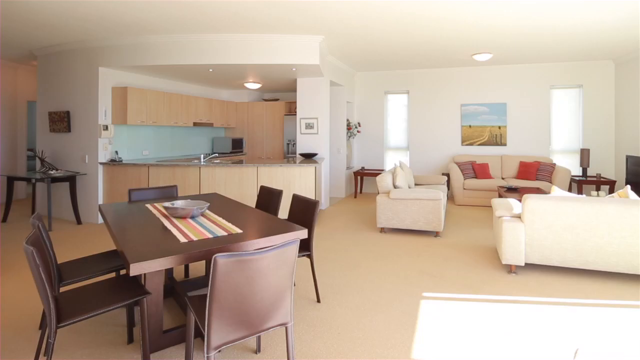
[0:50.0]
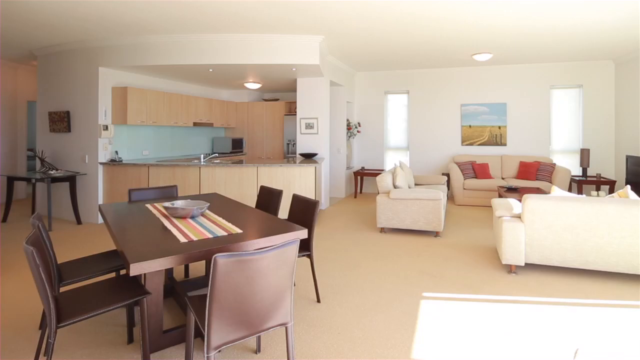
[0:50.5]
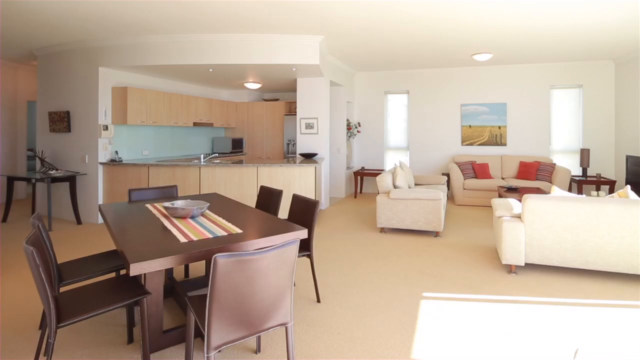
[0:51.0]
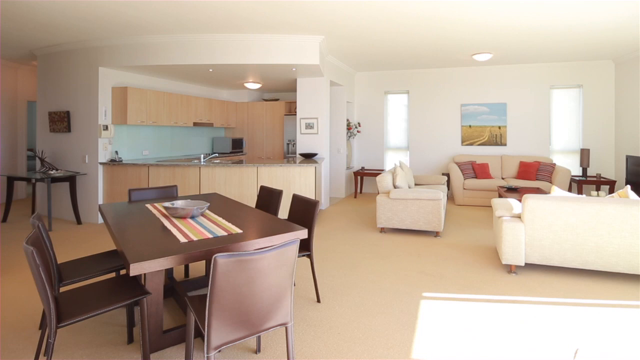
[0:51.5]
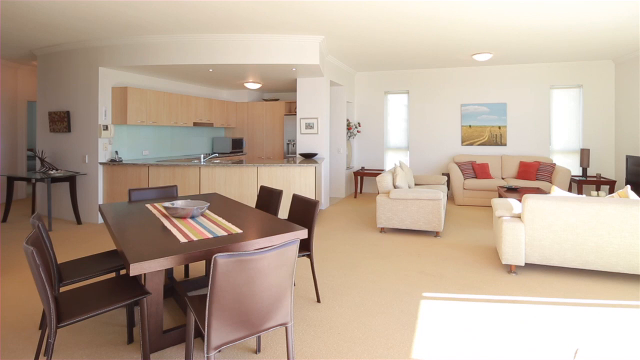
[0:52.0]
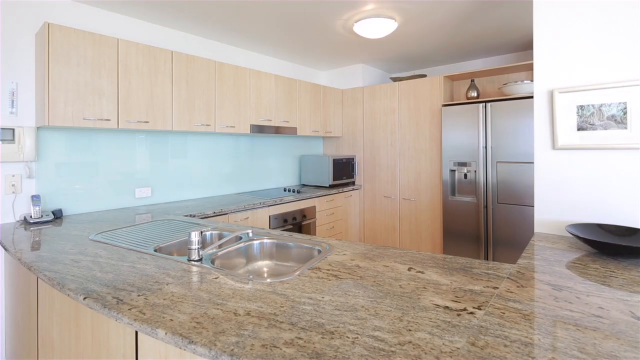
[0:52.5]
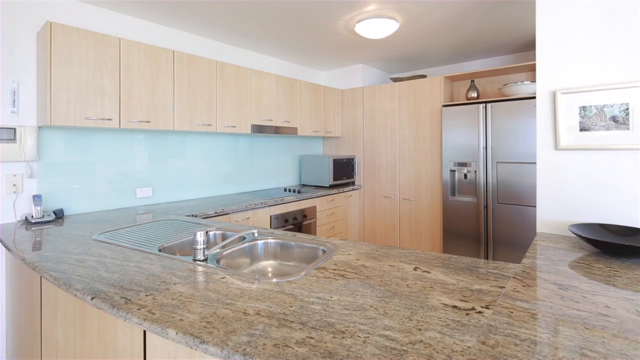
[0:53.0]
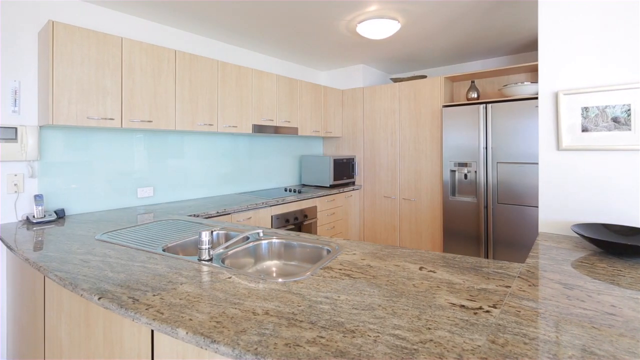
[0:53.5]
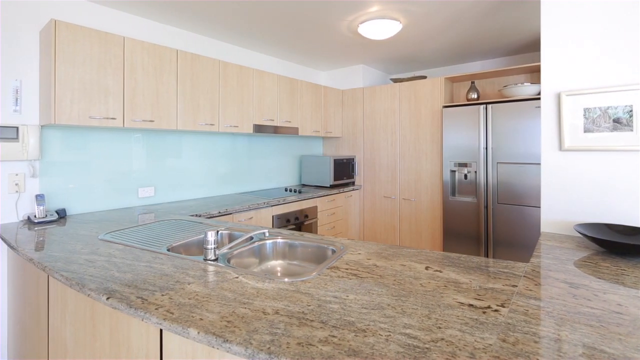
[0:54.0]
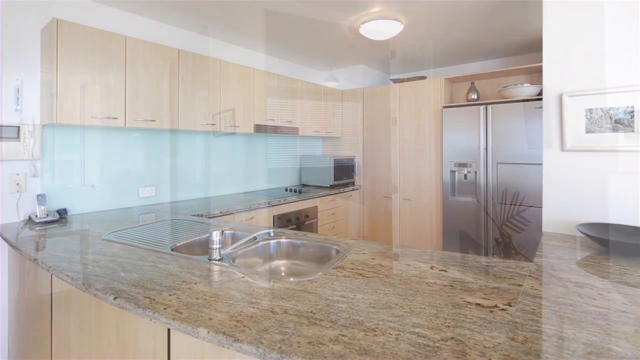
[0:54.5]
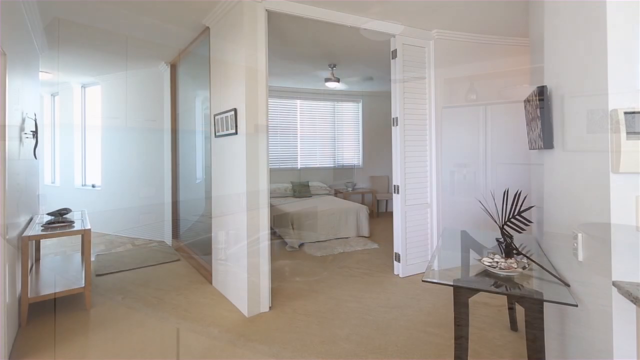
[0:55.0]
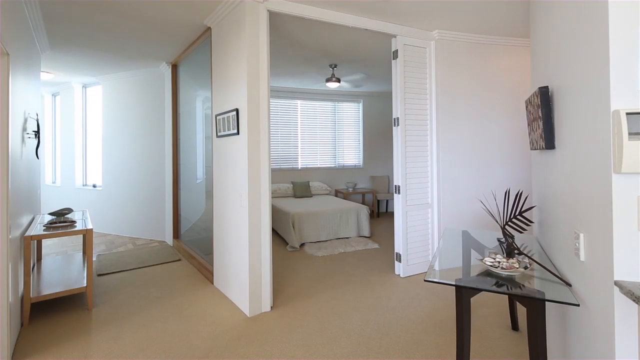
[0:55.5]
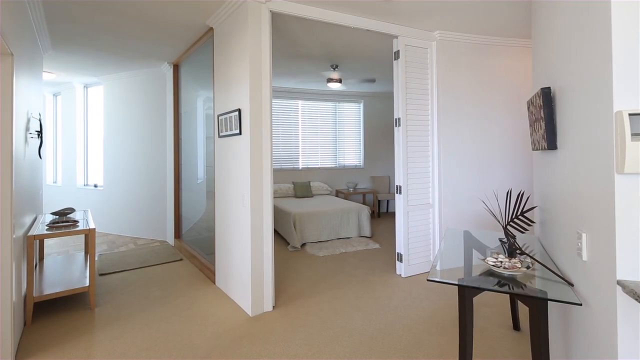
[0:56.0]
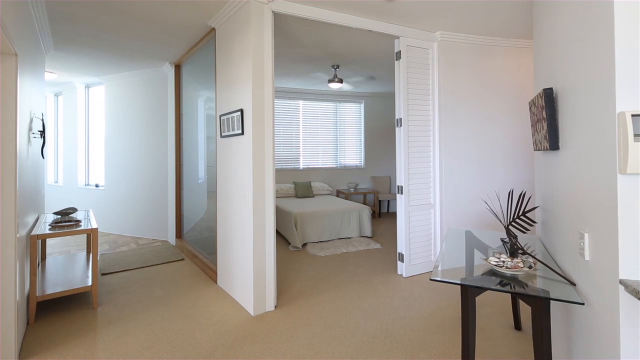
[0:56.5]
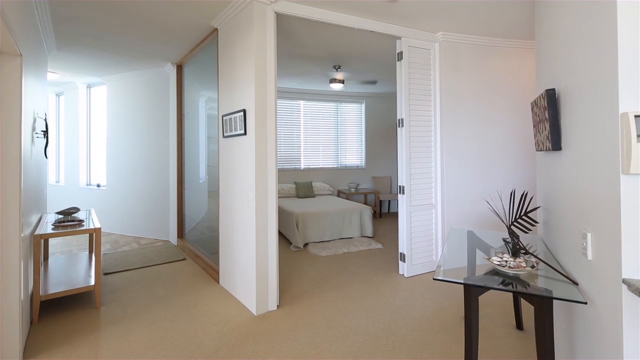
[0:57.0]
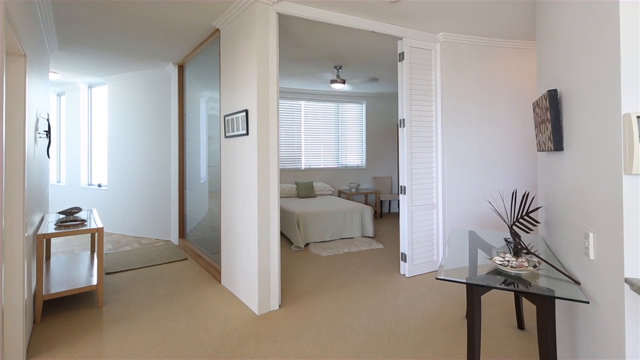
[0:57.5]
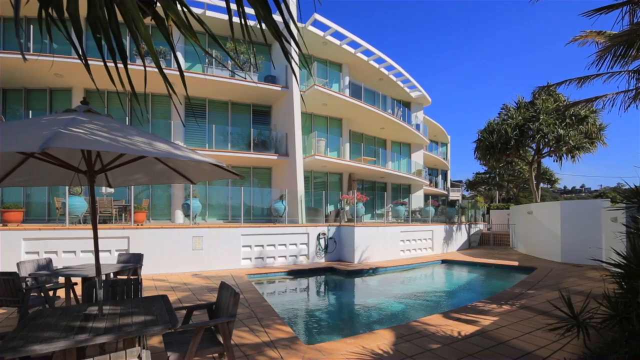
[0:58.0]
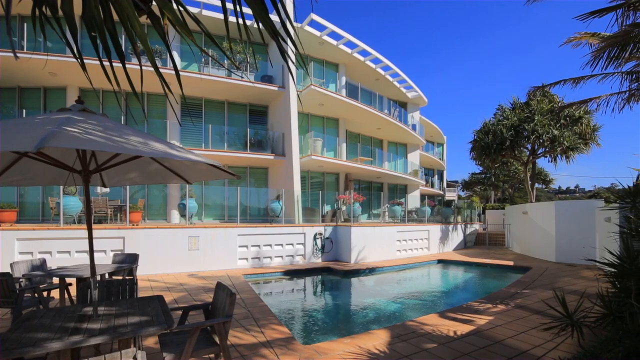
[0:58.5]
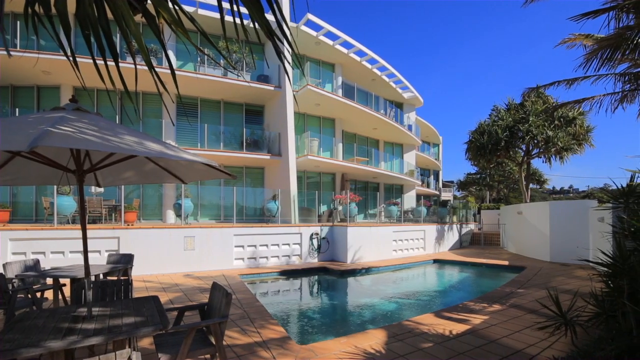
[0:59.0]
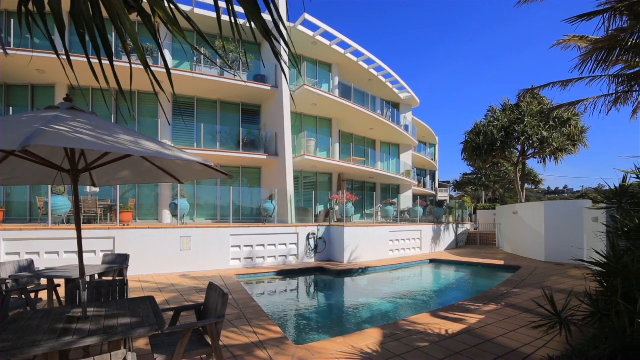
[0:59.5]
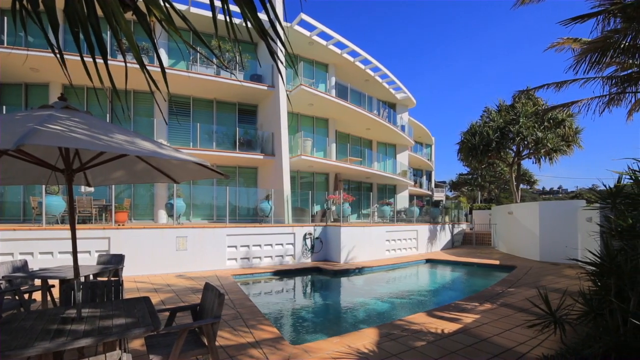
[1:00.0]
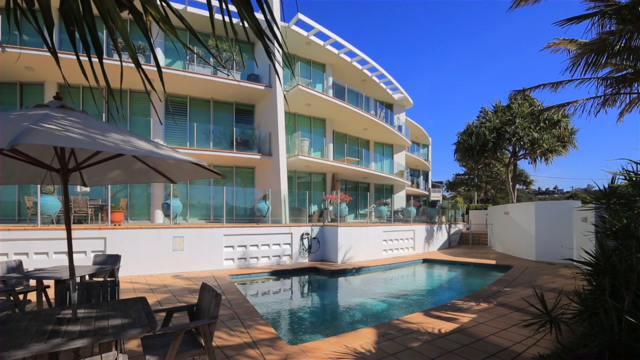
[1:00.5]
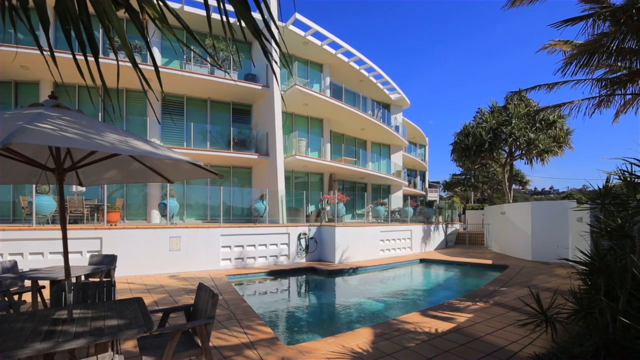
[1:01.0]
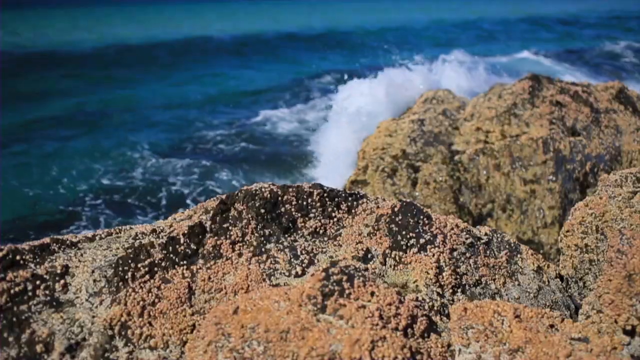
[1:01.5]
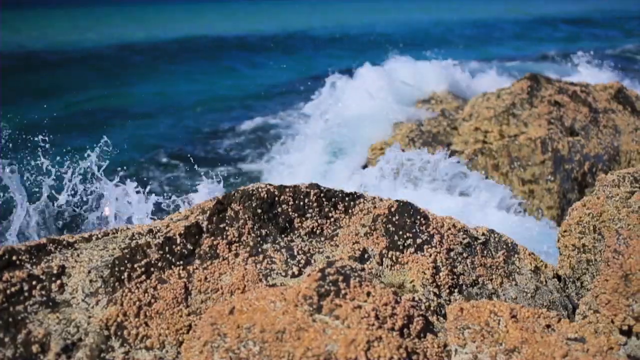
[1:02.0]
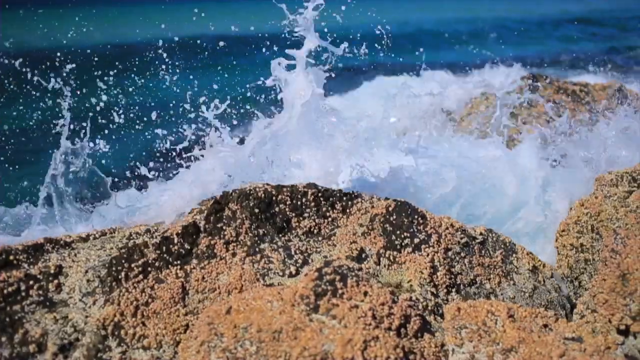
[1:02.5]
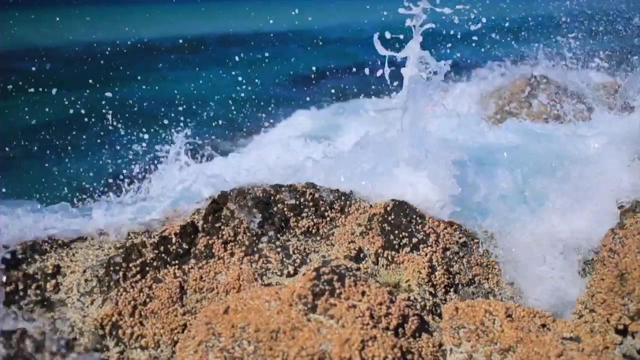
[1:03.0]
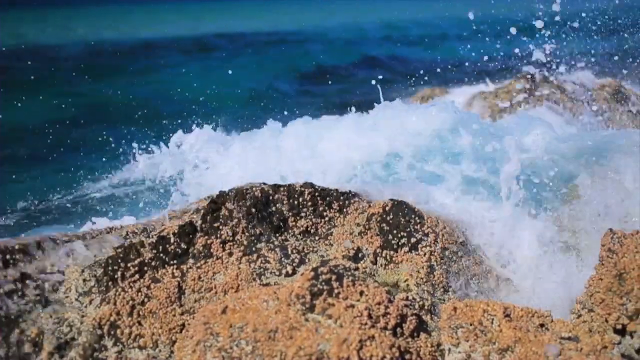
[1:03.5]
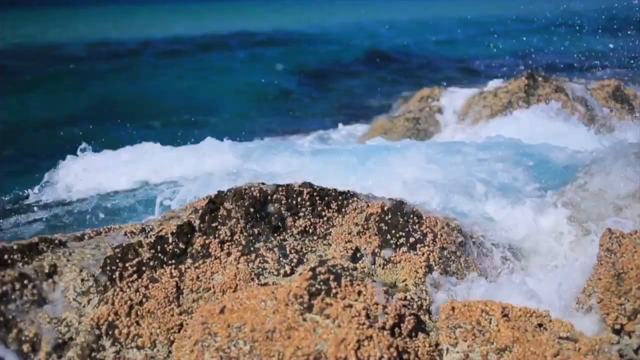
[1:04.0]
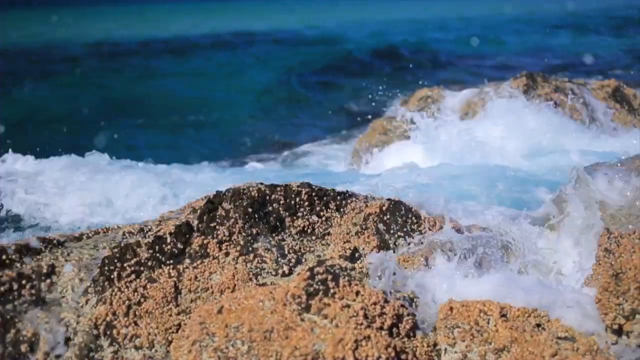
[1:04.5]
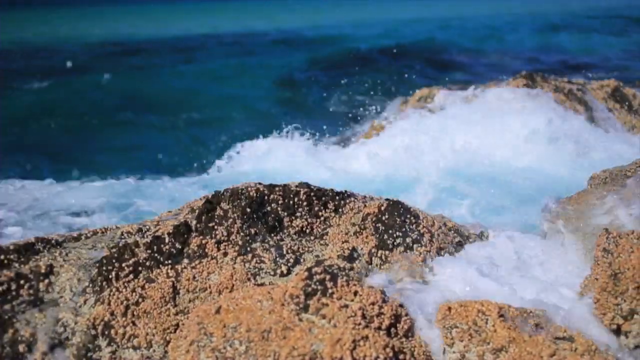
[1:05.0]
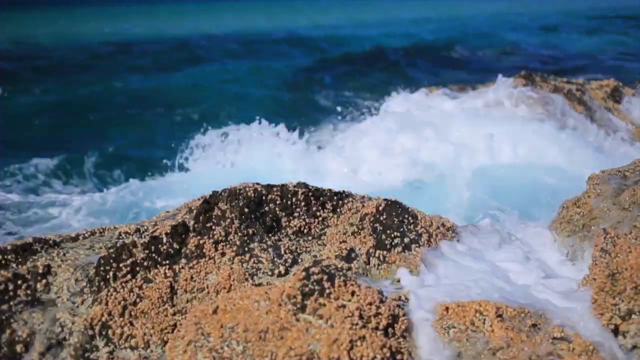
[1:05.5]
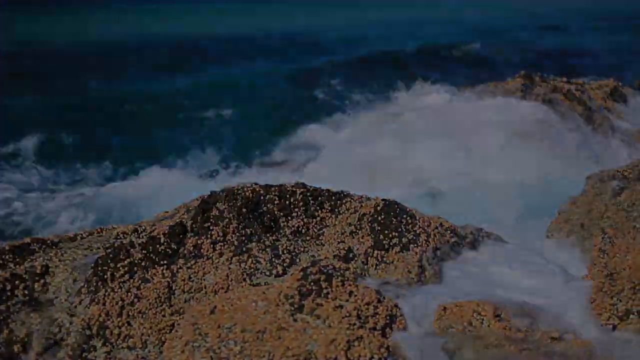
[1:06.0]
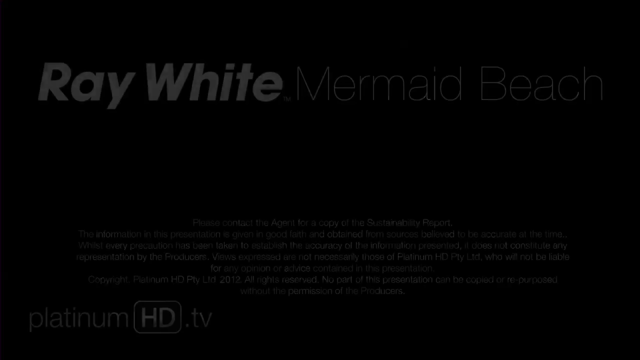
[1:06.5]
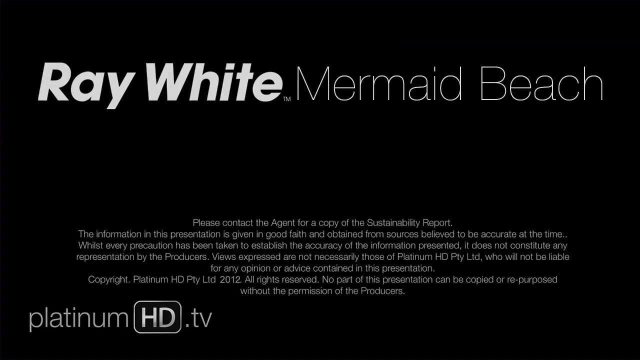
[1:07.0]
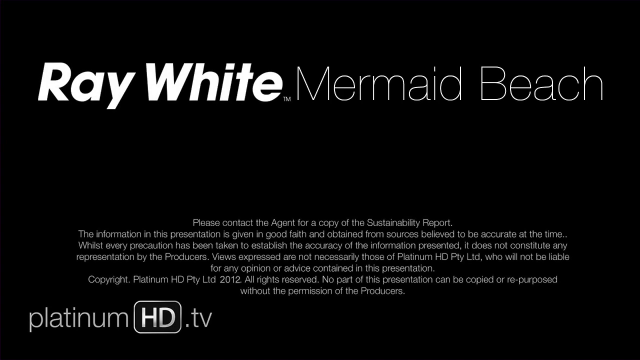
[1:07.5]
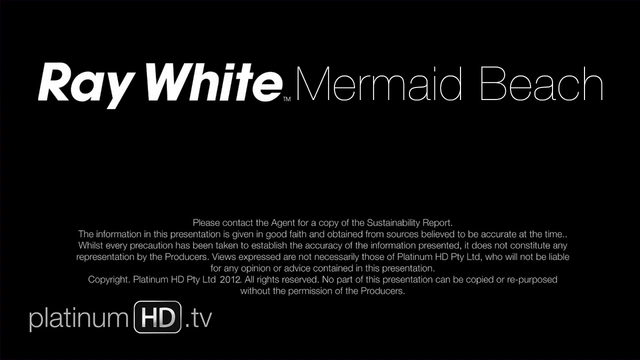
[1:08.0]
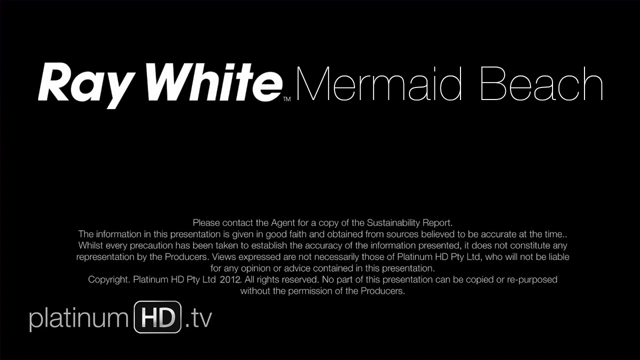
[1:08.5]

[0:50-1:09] The view of the dining room, kitchen and living room continues, seemingly from the entrance to the bedroom looking outward. It changes to a view from the counter looking into the kitchen. The counter appears to have a tan-brown marble look, and there are a lot of cabinets, all a lighter tan. The refrigerator is stainless steel, and a phone and a decorative bowl or plate are on the counter. The scene switches to what appears to be a different bedroom, with different decorative pillows and a different look, apparently viewed from the hallway. There is a long hallway, with a glass window-type feature between the hallway and the other bedroom, and in the hallway are a wooden table and a glass table. The view then changes to the outside of the hotel, showing two tables, some chairs, an umbrella and a small pool, separated from the hotel by a little wall that gives some privacy while still leaving plenty visible. A wave crashes along the rocks, and finally an end card reads "Ray White Mermaid Beach" in white text on an all-black background, with a logo in the corner reading "platinum HD.tv" and a lot of text in the middle at the bottom.